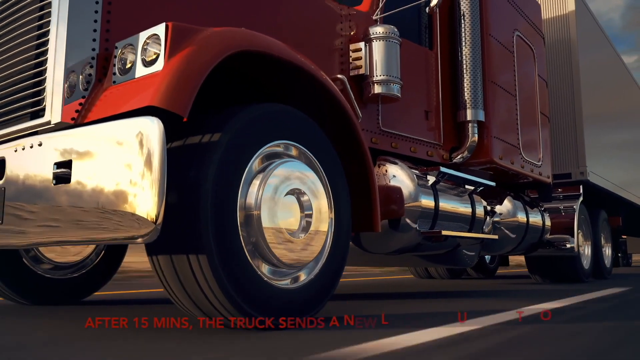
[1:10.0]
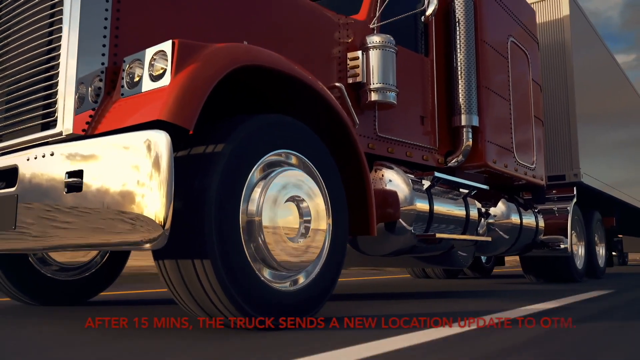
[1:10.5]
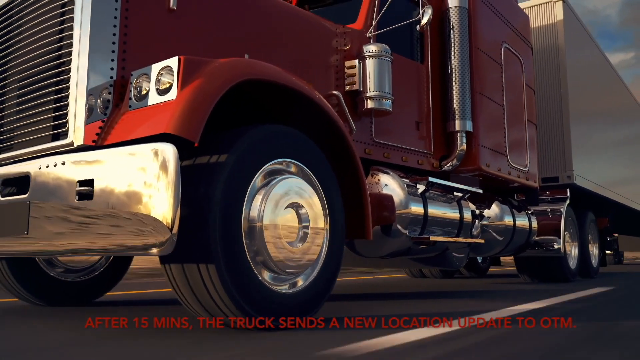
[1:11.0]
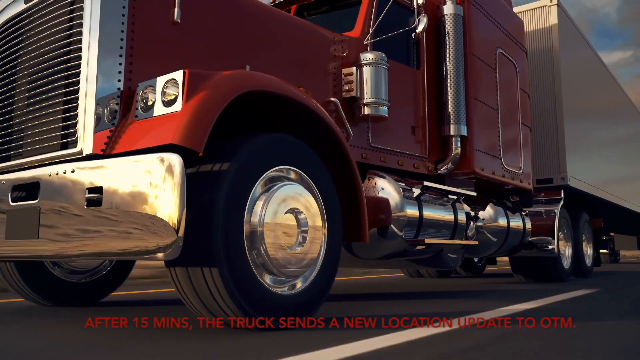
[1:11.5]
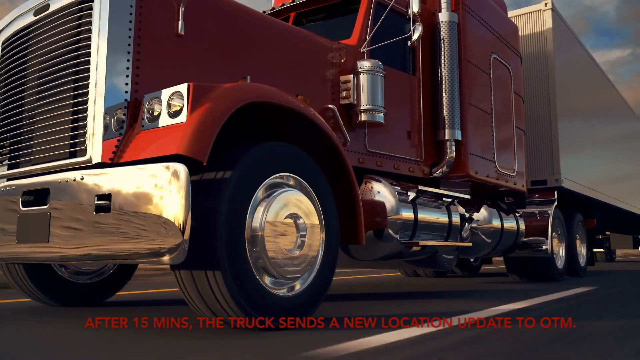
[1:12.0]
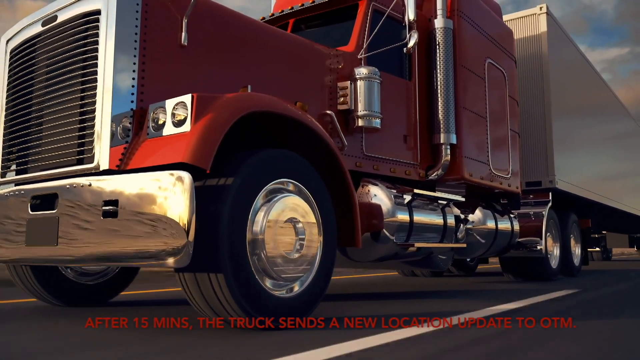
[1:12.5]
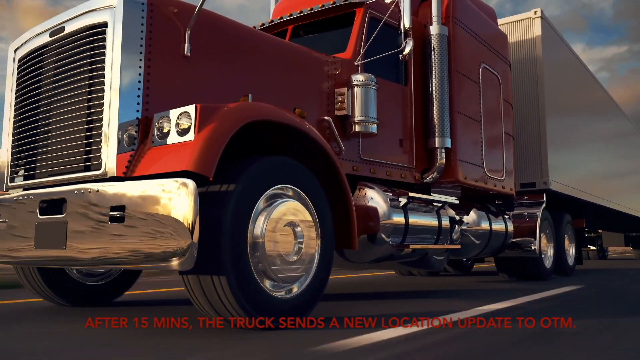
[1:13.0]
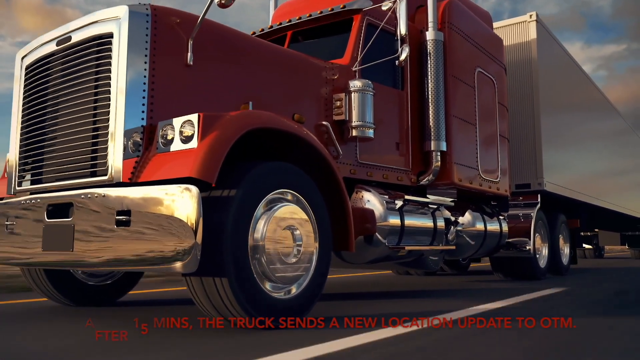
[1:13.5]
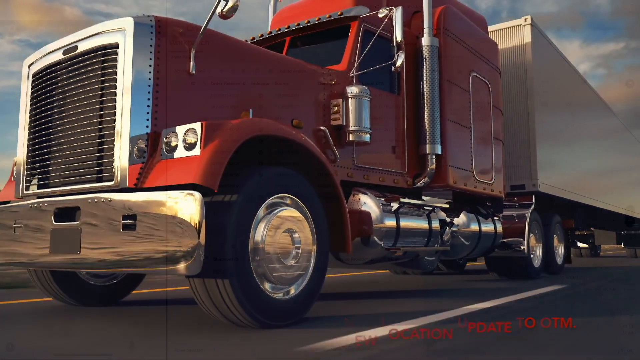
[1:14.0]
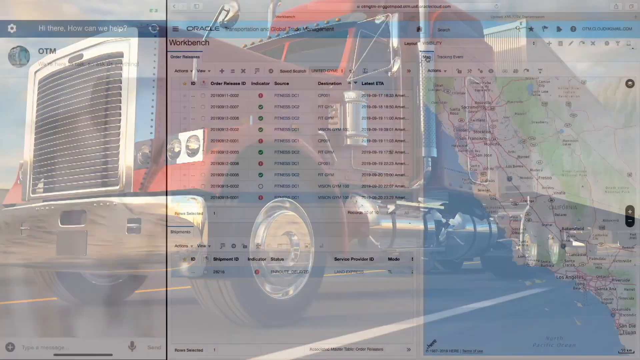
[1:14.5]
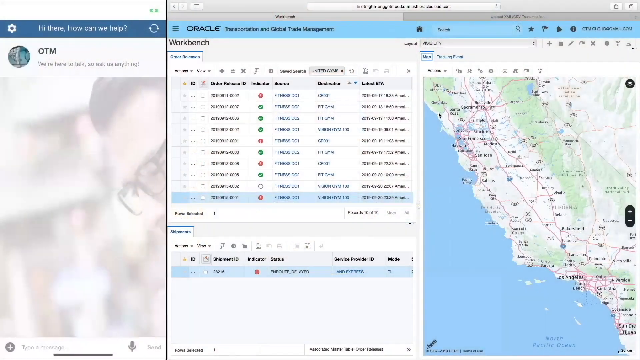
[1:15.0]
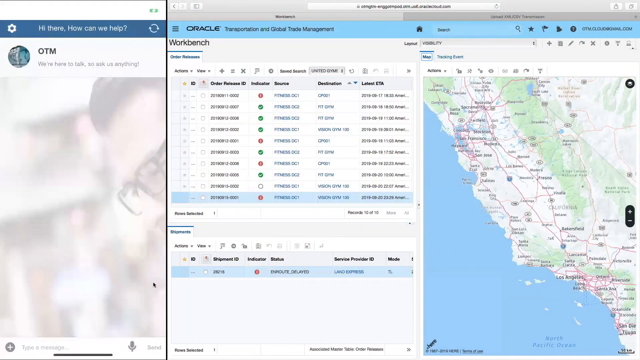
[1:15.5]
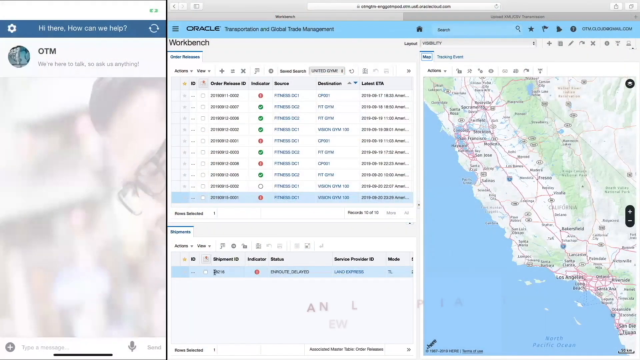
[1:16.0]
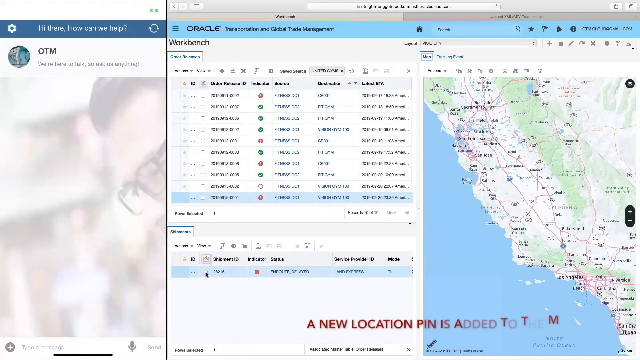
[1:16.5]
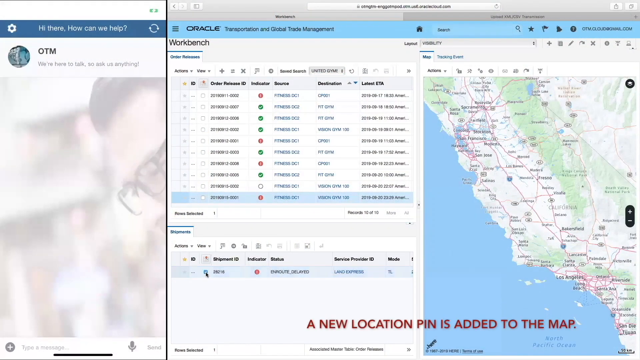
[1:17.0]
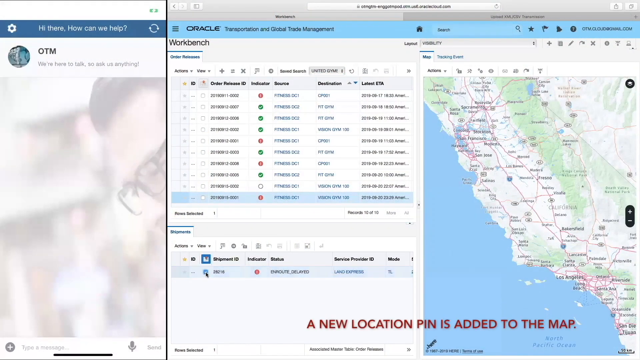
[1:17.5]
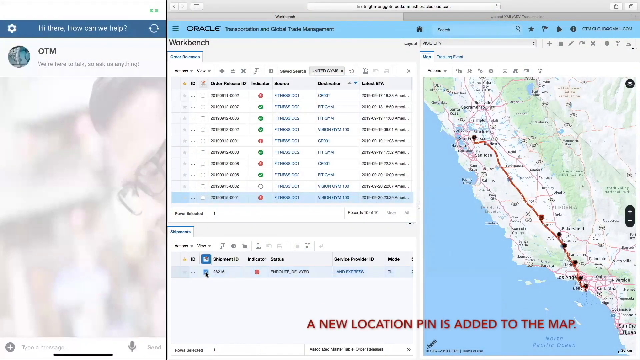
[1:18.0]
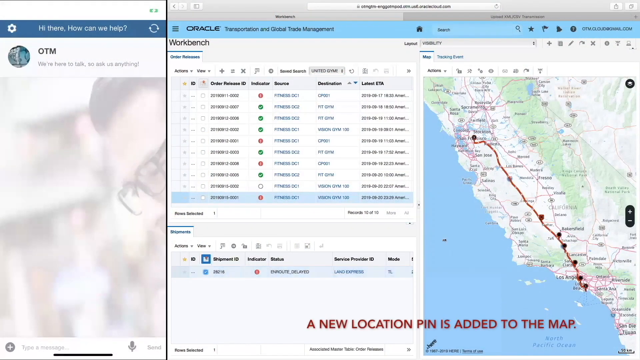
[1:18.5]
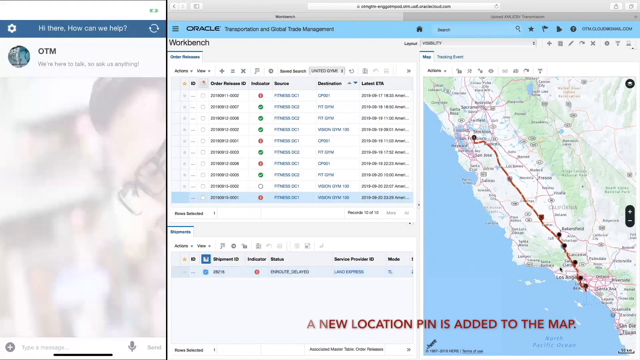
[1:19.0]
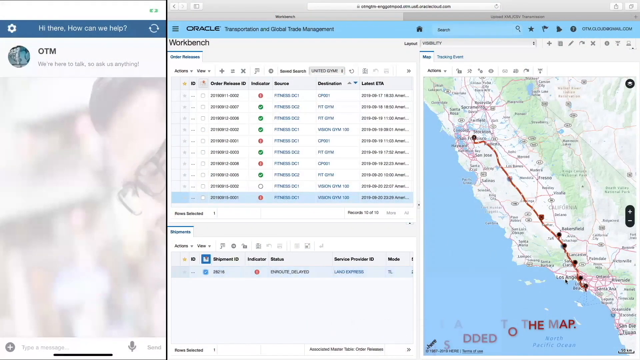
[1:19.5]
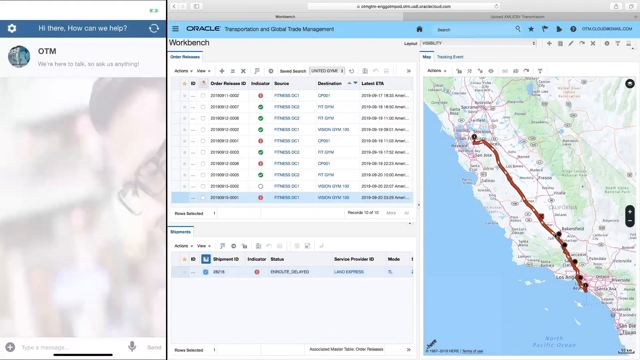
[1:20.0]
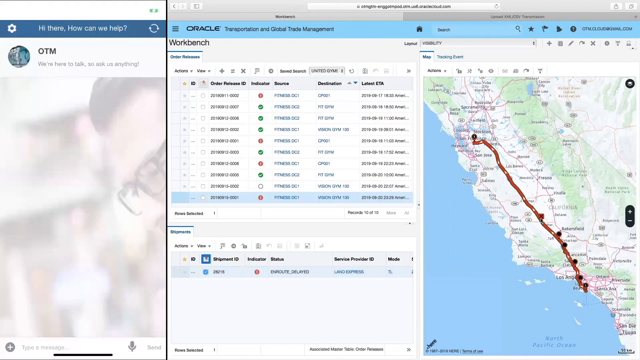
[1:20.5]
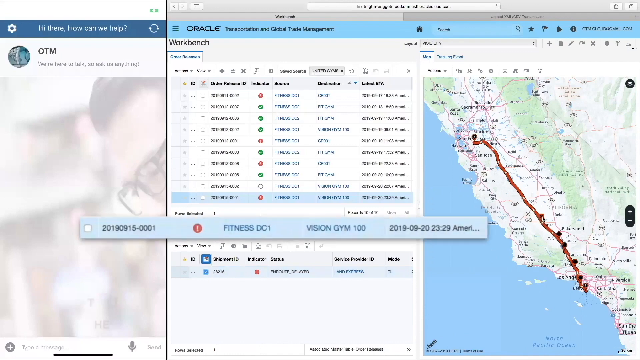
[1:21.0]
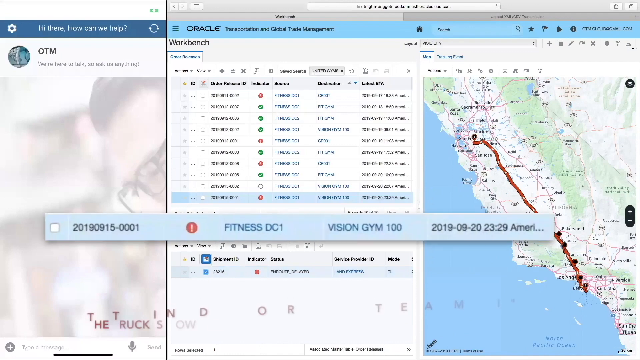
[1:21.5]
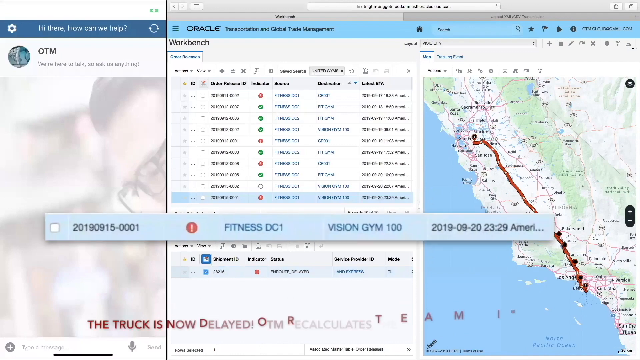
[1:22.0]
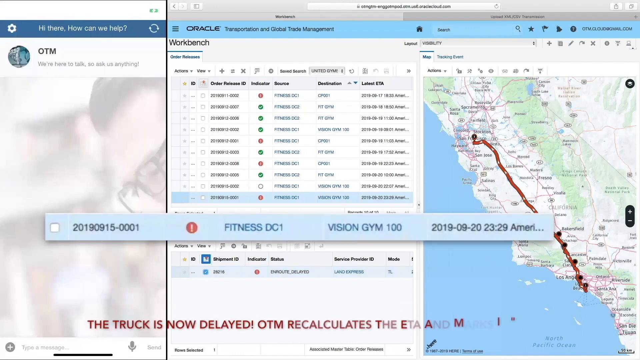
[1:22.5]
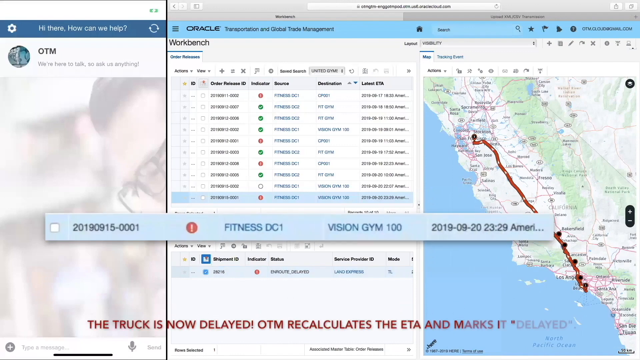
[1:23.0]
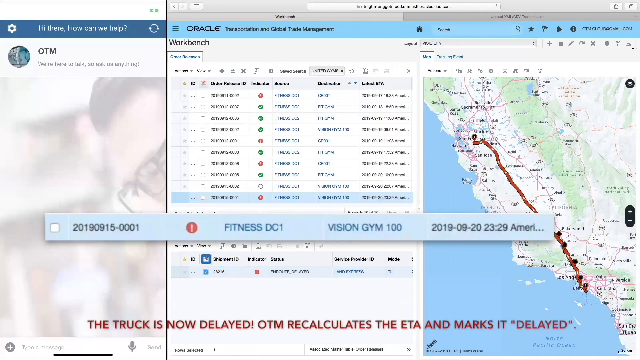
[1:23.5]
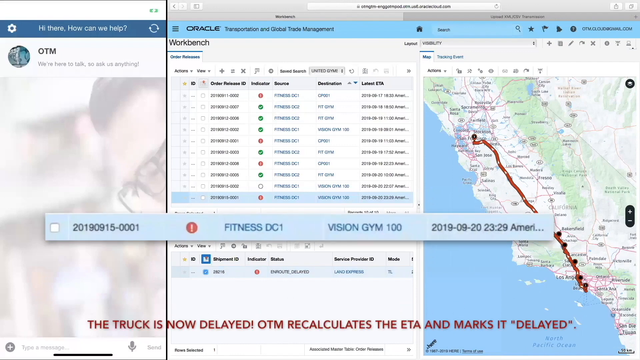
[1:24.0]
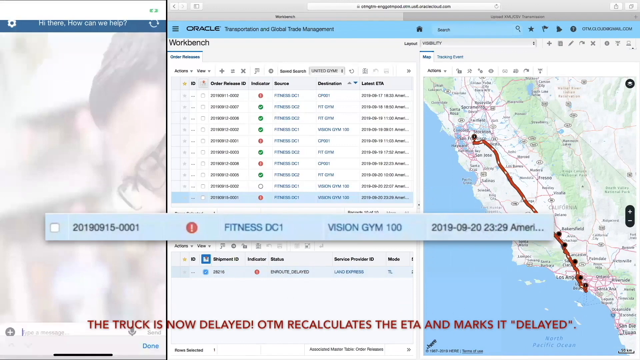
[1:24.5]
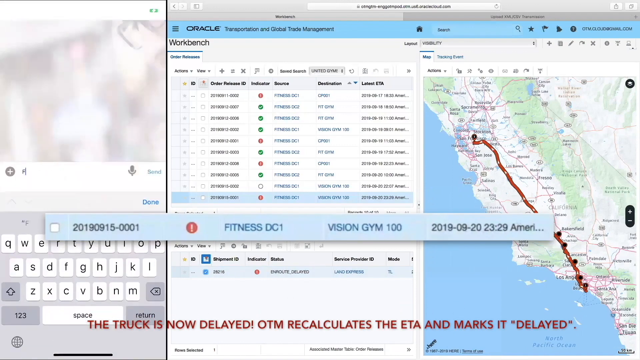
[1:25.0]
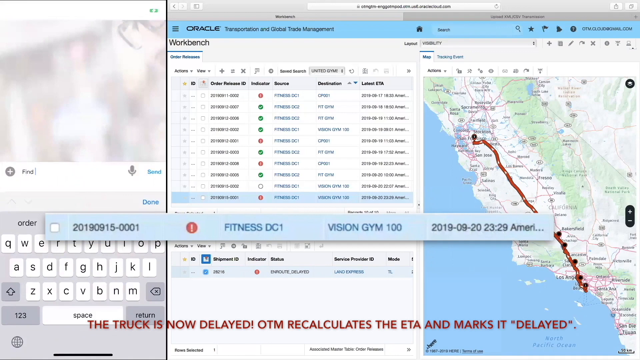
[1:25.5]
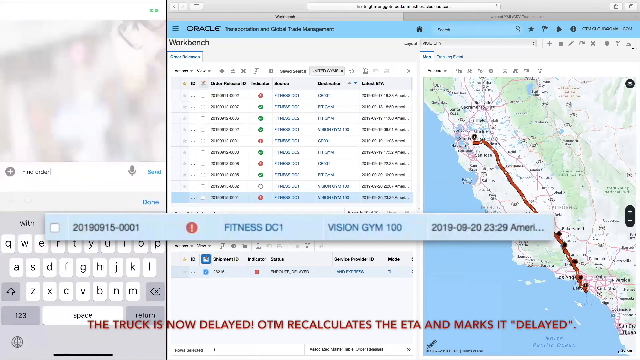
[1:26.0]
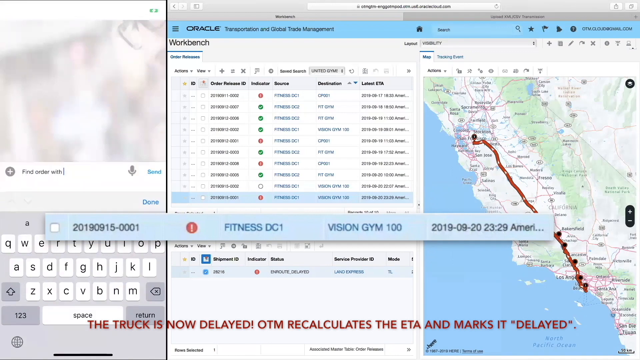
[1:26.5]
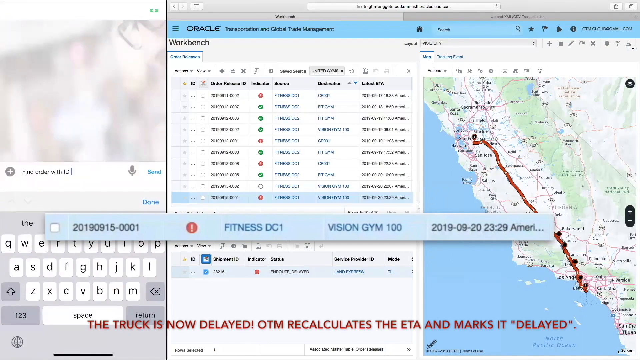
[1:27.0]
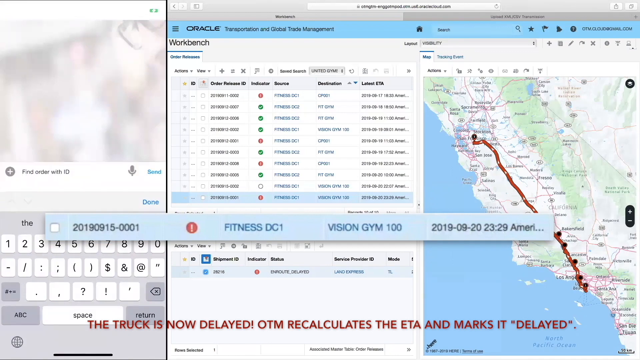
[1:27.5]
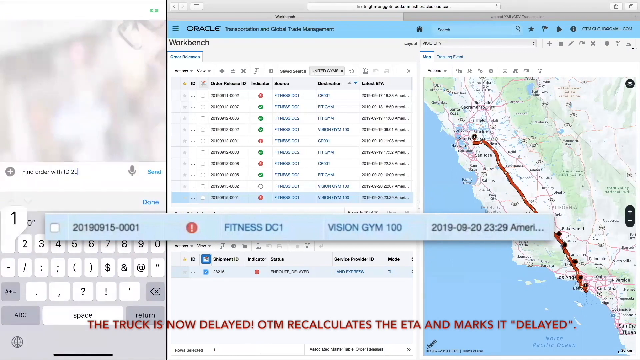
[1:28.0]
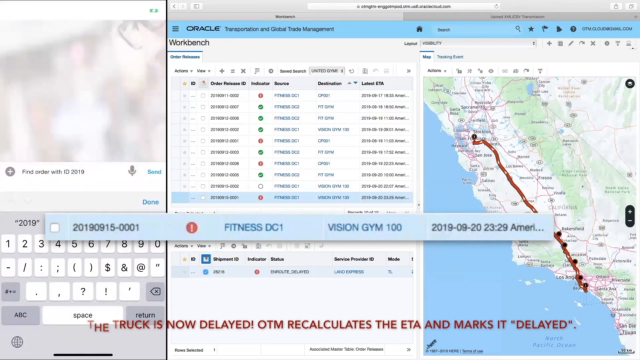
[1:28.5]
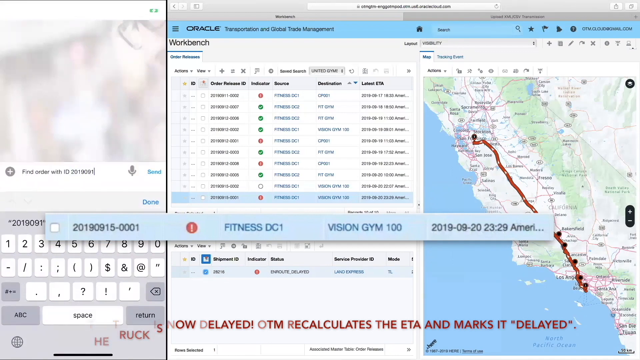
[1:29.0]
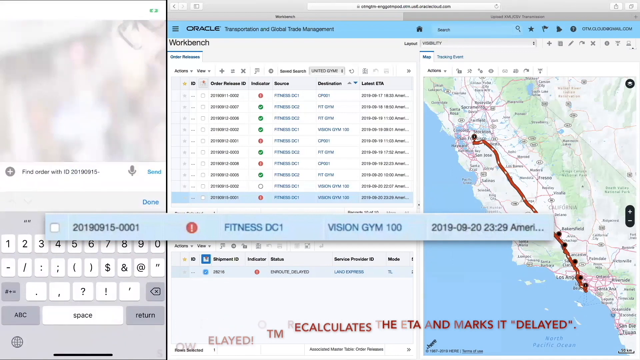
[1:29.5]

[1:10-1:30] The camera stays on the front of the rig and slowly zooms outward as the text "After 15 minutes, the truck sends a new location update to OTM" appears. The text fades and the video fades back to the Oracle dashboard, where text in the bottom right says "a new location pin is added to the map". The mouse moves to the truck's location on the right side of the map. The view zooms into the latest update on the Oracle Workbench, and text at the bottom reads "It detects the truck is now delayed. OTM recalculated the ETA and marks it delayed." The truck's status is shown zoomed in on the screen. On the left, a message is typed into the message board and sent, asking to find the order with the ID of the truck that was marked delayed.